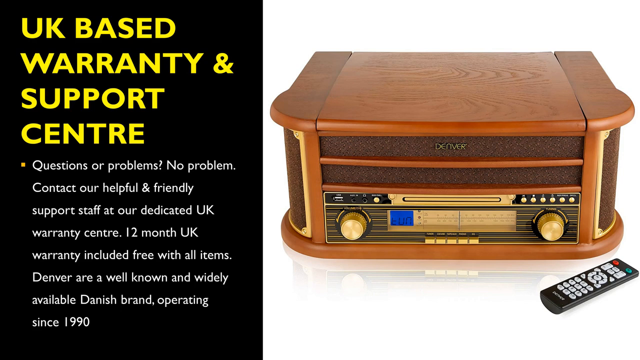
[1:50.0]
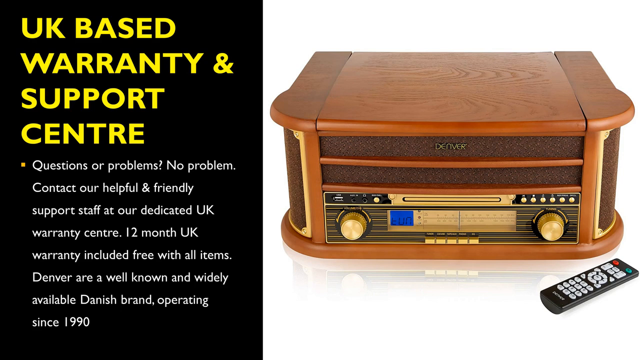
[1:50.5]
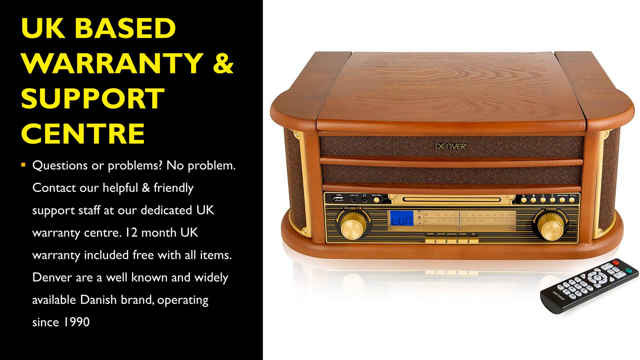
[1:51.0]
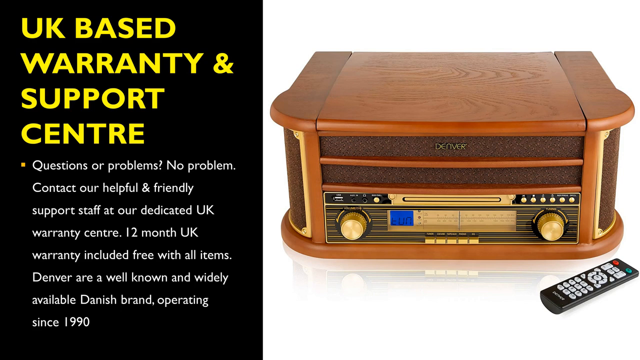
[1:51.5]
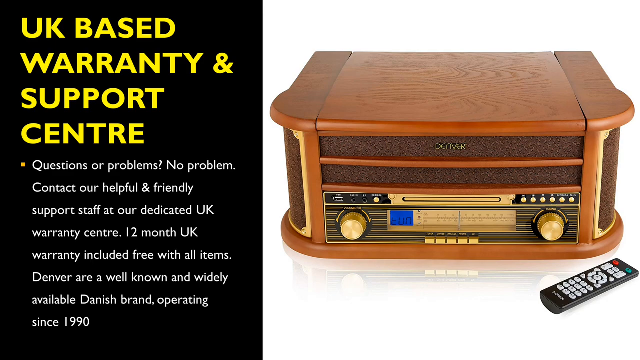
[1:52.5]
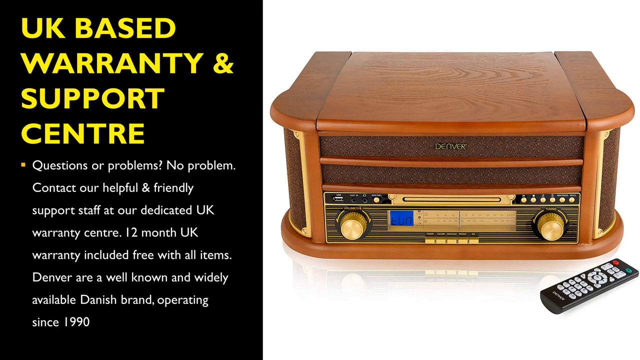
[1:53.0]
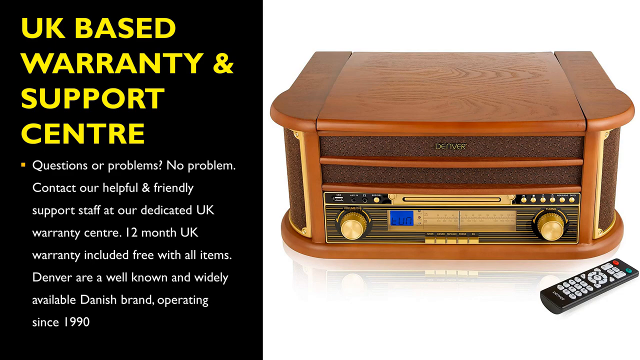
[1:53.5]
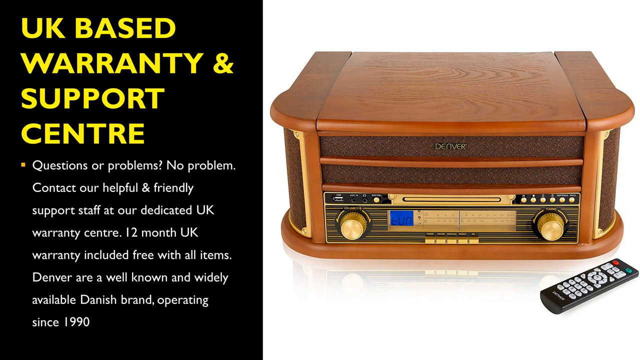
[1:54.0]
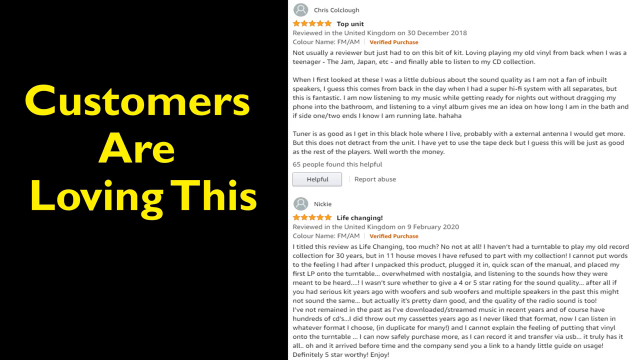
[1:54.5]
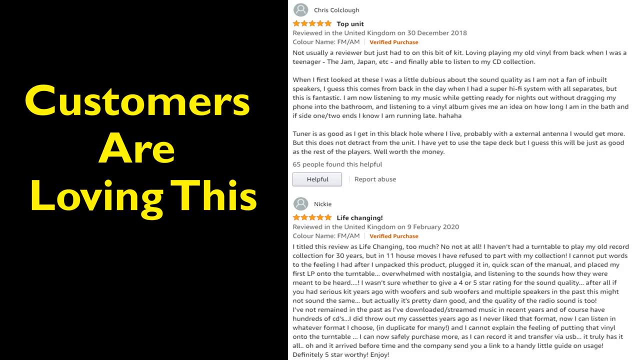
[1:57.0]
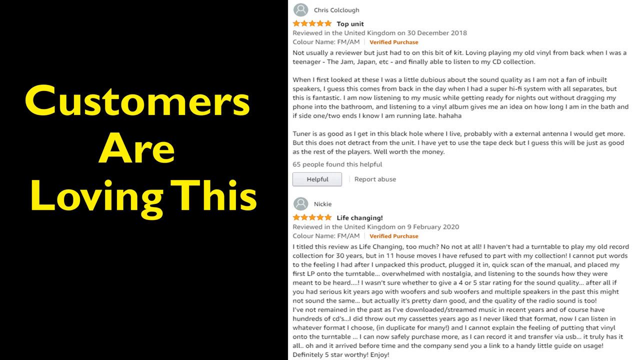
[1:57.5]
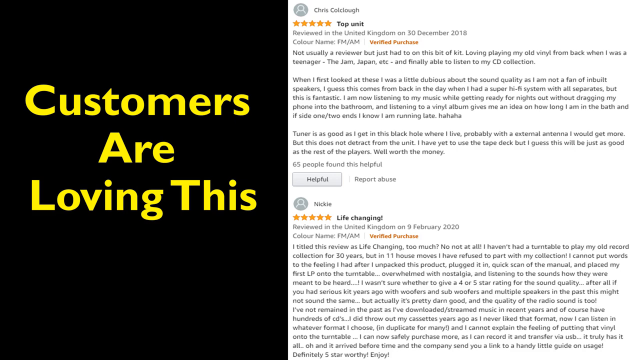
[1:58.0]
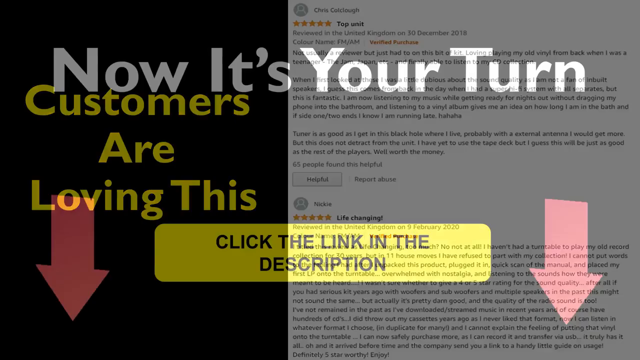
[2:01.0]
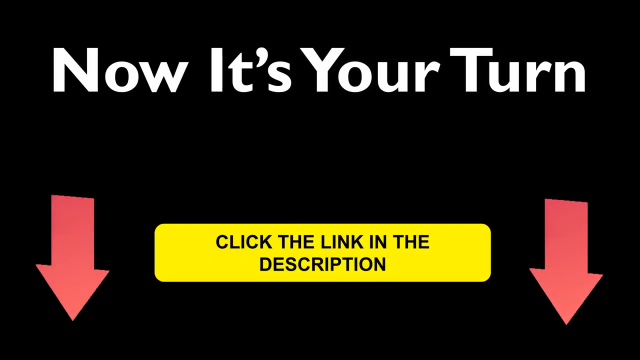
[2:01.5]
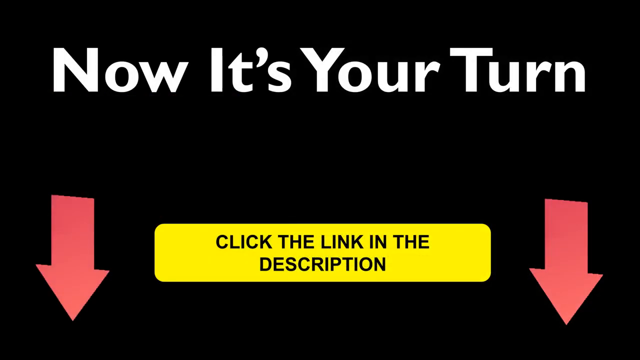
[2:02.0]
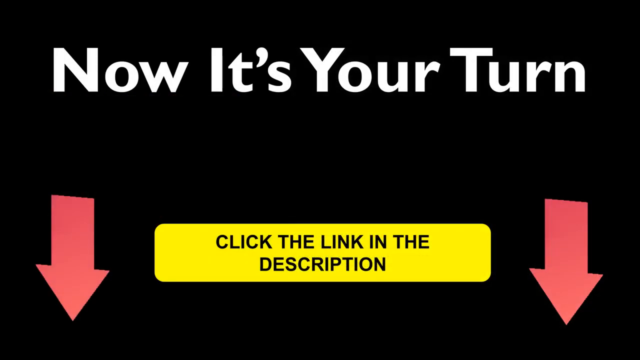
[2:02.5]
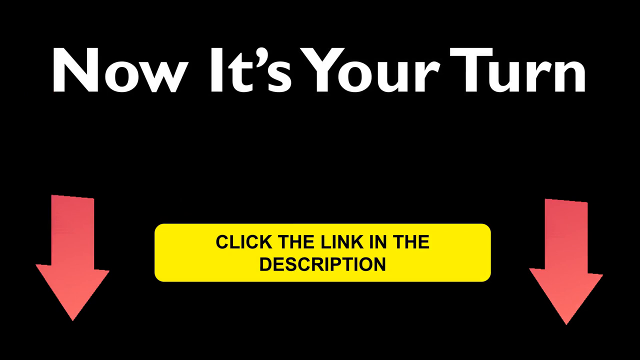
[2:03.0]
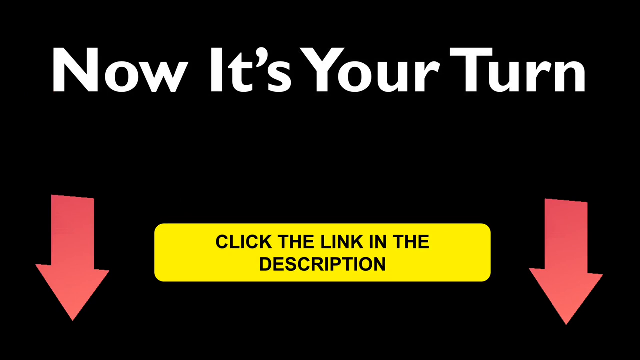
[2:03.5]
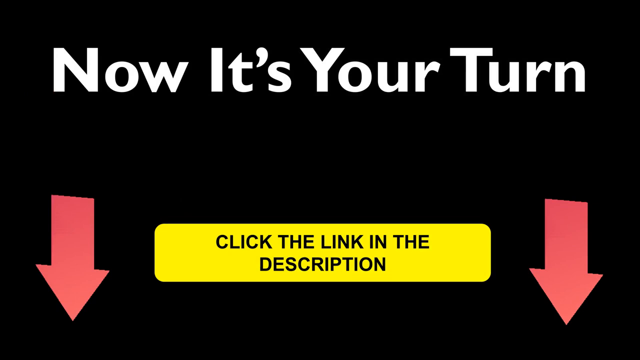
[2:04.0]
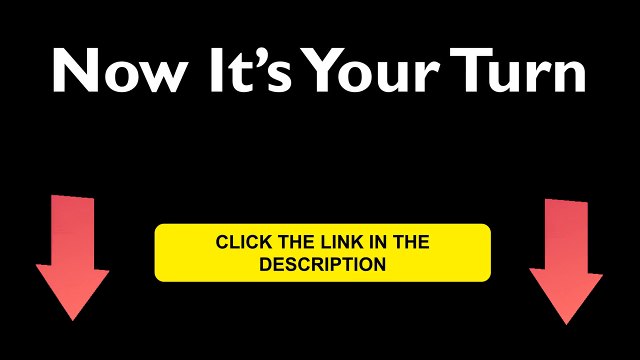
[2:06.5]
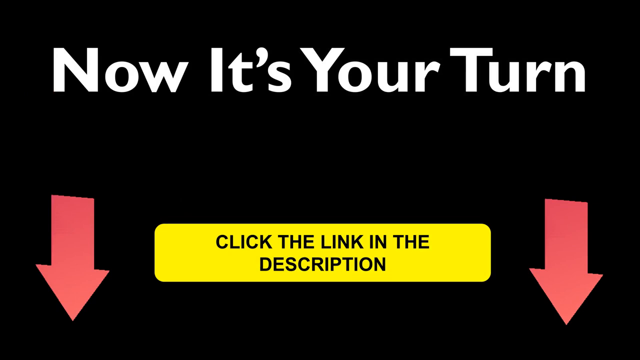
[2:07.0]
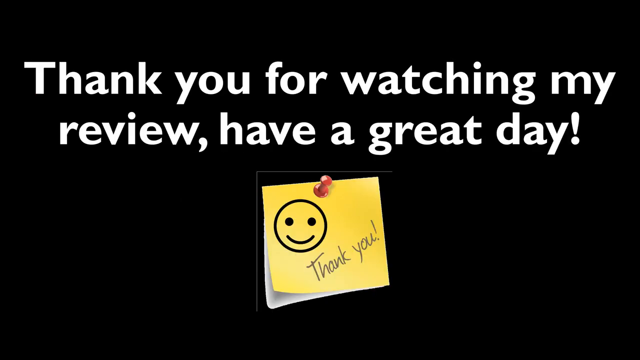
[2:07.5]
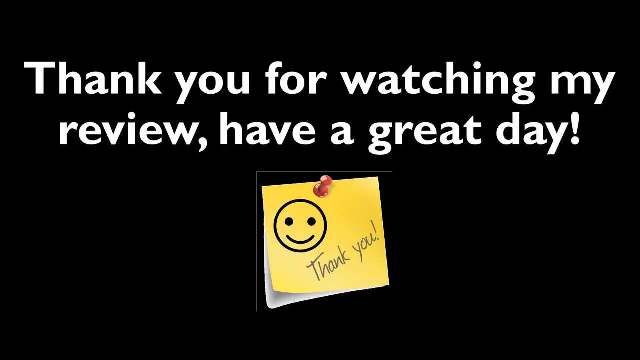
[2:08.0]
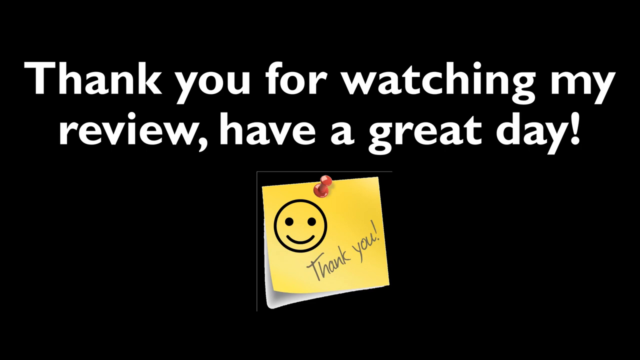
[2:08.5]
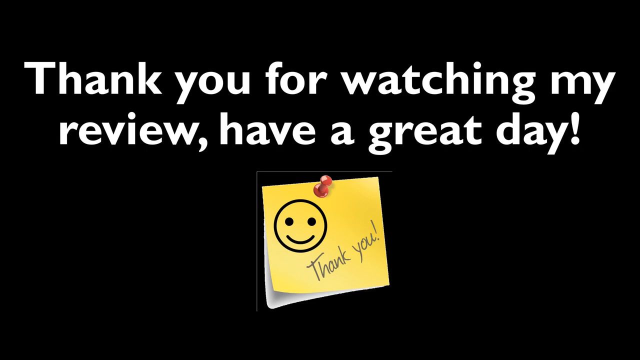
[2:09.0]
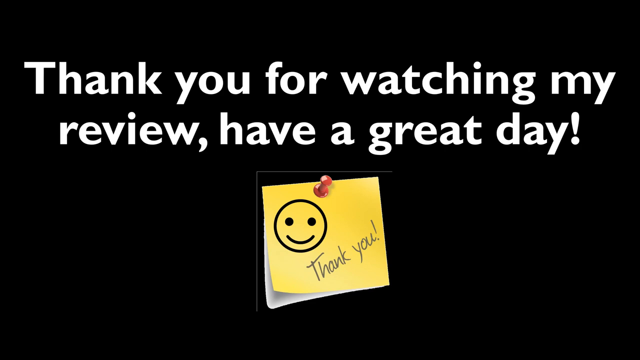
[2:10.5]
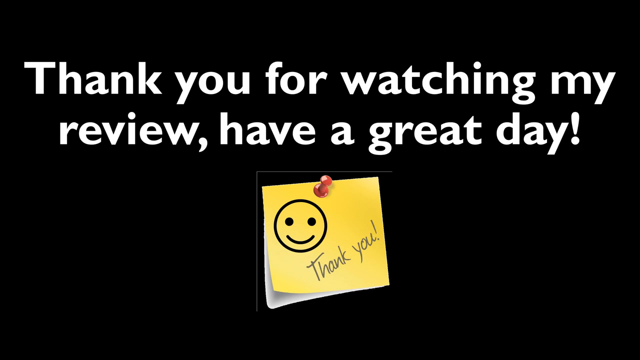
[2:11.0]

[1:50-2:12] On a black background on the left side, yellow text reads "UK based warranty and support centre", with "centre" spelled with the E and R switched from the American spelling. Next to a yellow bullet point, white text reads "questions or problems, no problems. Contact our helpful and friendly support staff at our dedicated UK warranty center. 12 month UK warranty included free with all items. Denver are a well known and widely available Danish brand." An image shows the product closed, kind of facing forward, with a rectangular remote in the lower right-hand corner of the image. Yellow text then reads "customers are loving this" above what look like two reviews in very small text, both with 5 stars; one says "life changing", and the other possibly says "top unit". The screen then goes blank and white text reads "now it's your turn". Two arrows point down, and between them is a yellow rectangle with black text reading "click the link in the description". This changes to white text reading "thank you for watching my review, have a great day", with a yellow post-it showing a black smiley face and the words "thank you".